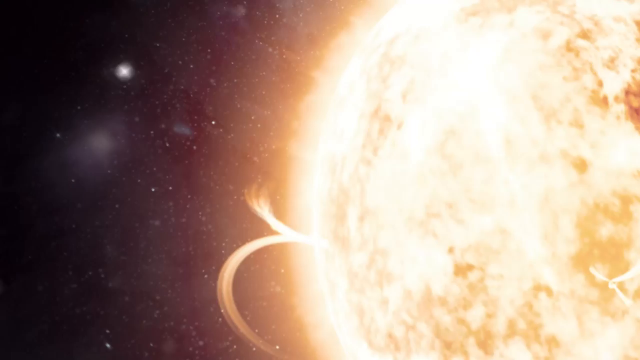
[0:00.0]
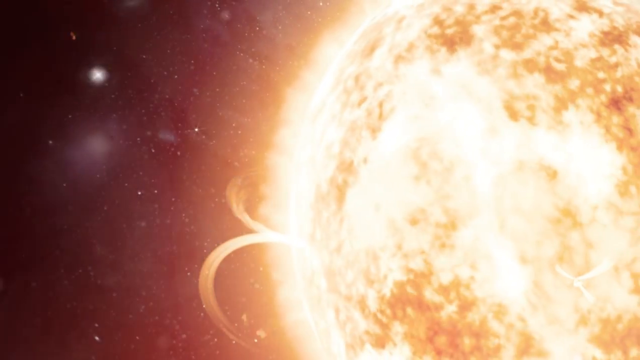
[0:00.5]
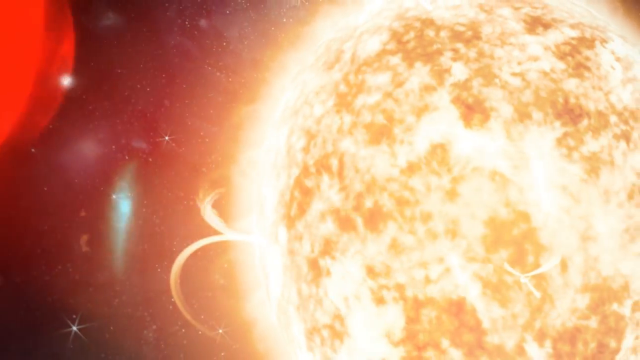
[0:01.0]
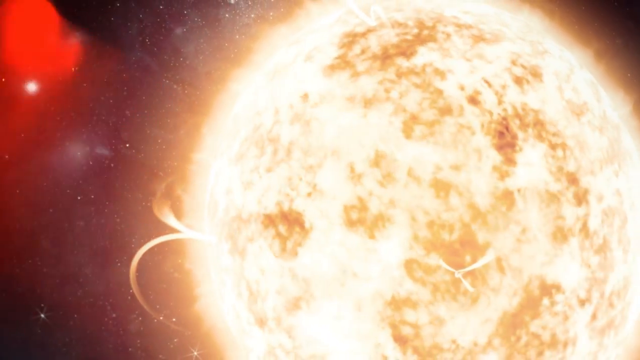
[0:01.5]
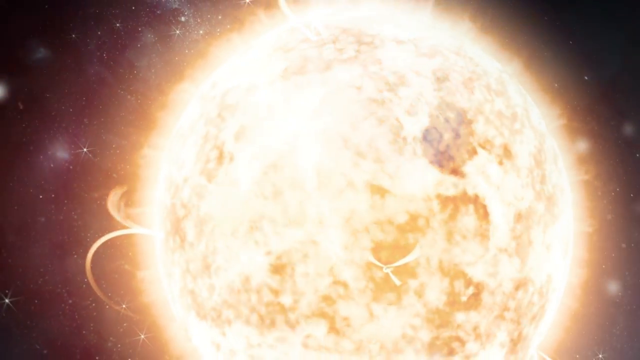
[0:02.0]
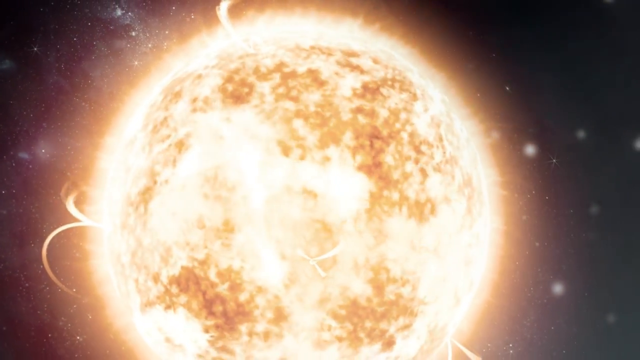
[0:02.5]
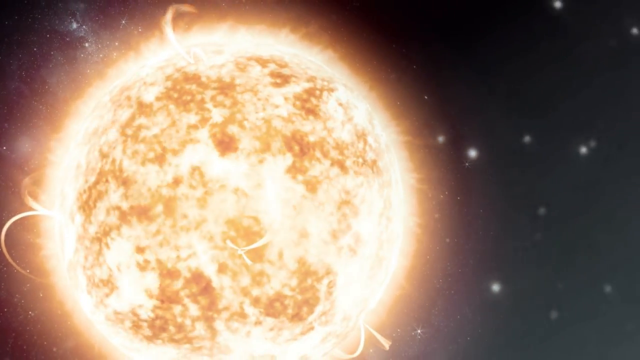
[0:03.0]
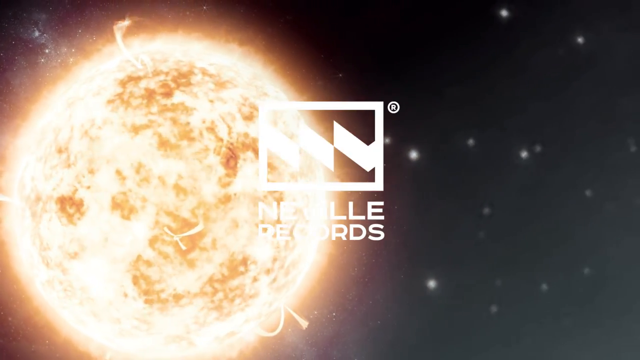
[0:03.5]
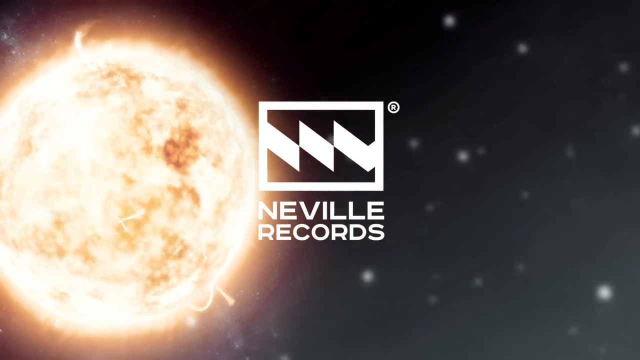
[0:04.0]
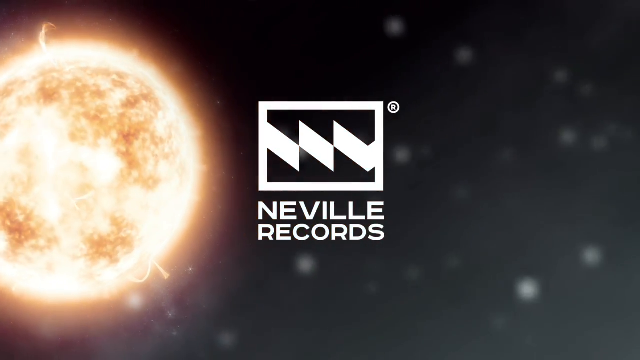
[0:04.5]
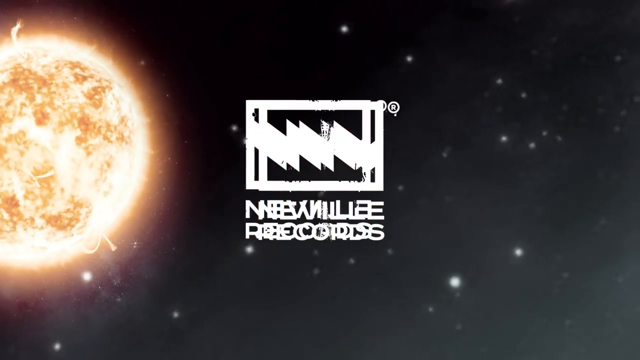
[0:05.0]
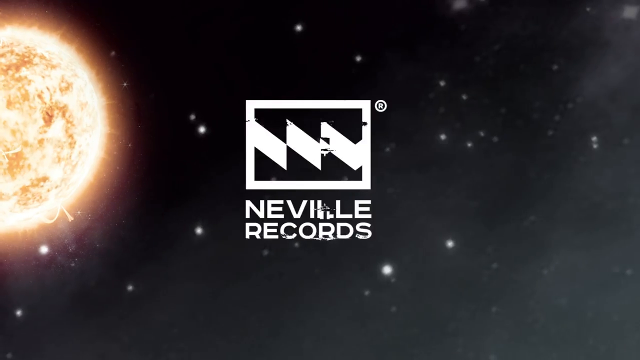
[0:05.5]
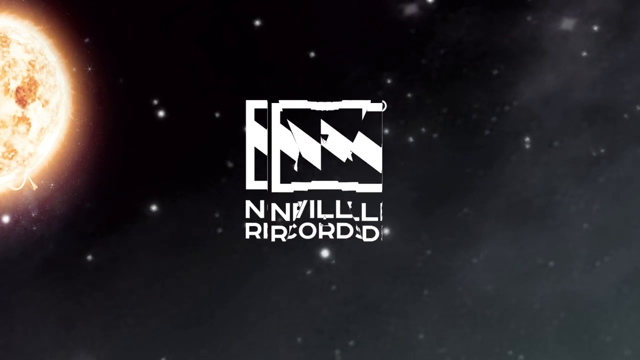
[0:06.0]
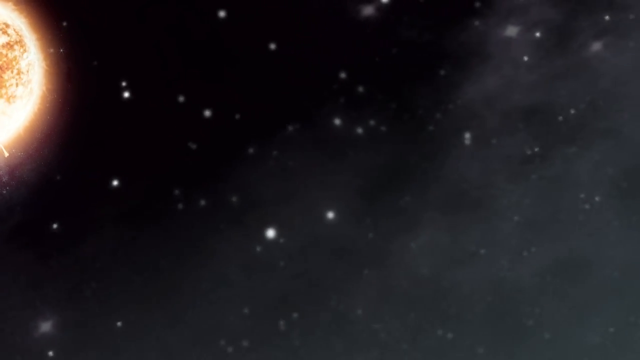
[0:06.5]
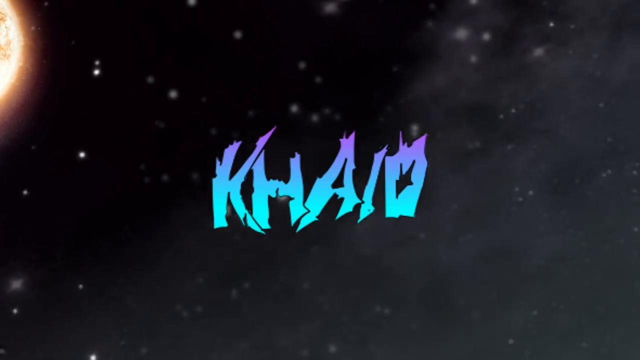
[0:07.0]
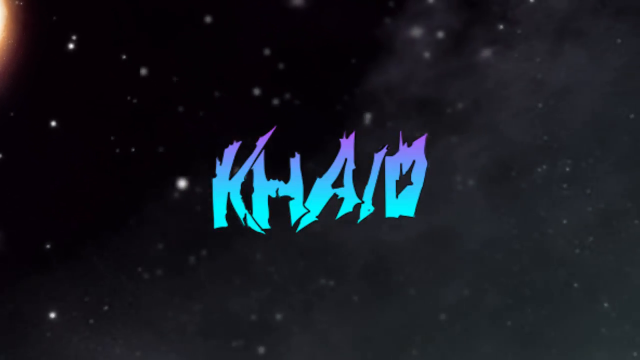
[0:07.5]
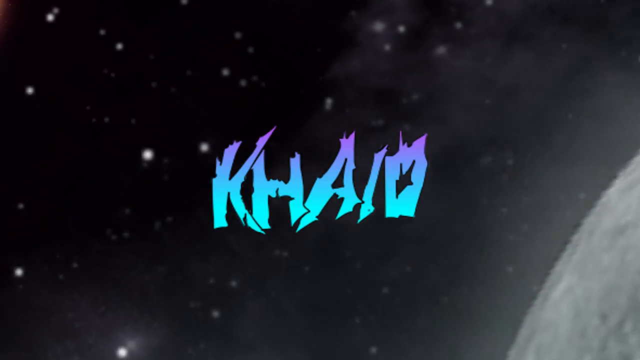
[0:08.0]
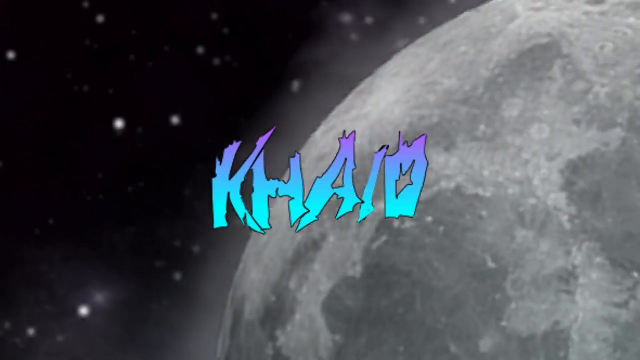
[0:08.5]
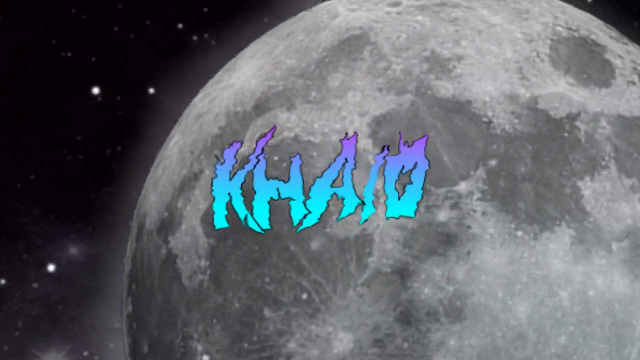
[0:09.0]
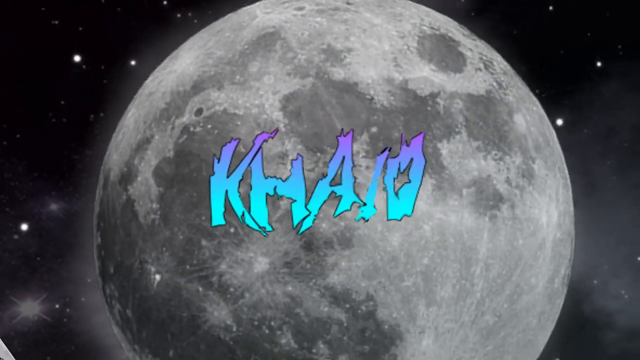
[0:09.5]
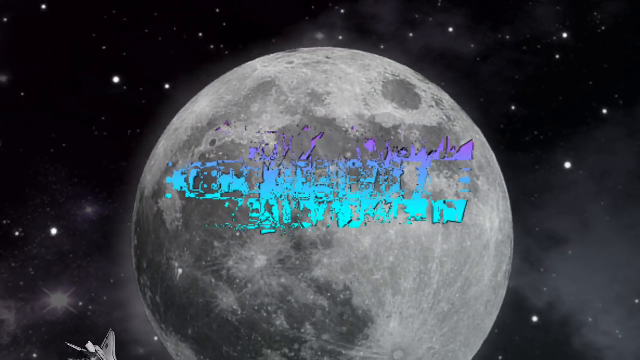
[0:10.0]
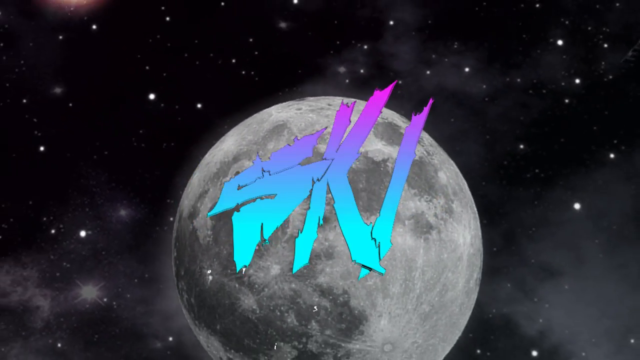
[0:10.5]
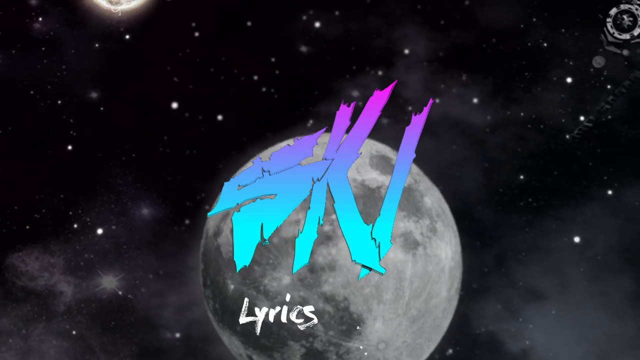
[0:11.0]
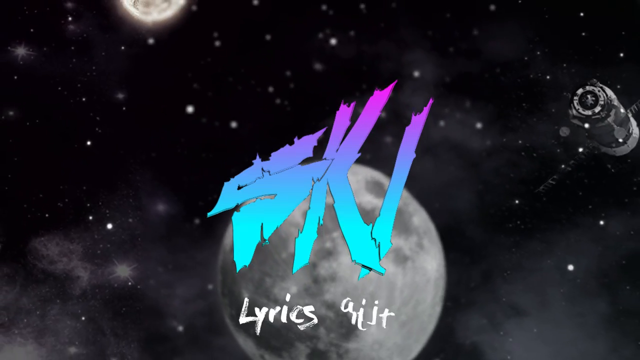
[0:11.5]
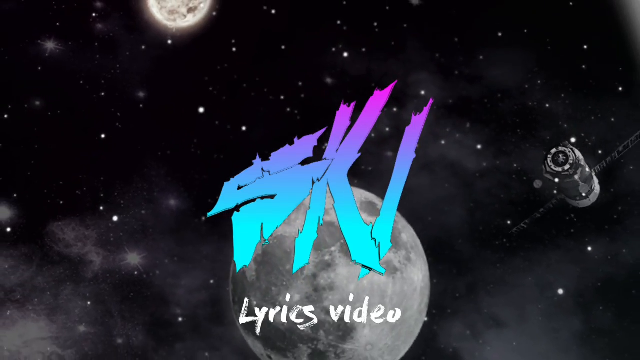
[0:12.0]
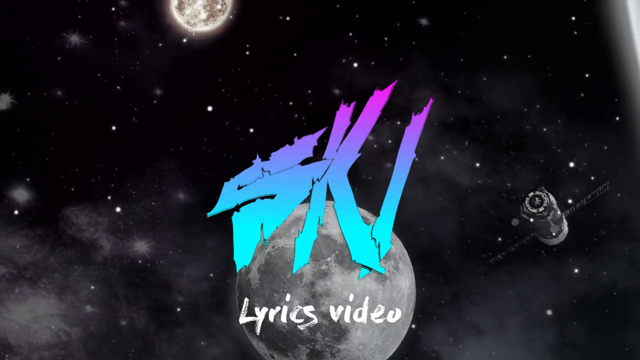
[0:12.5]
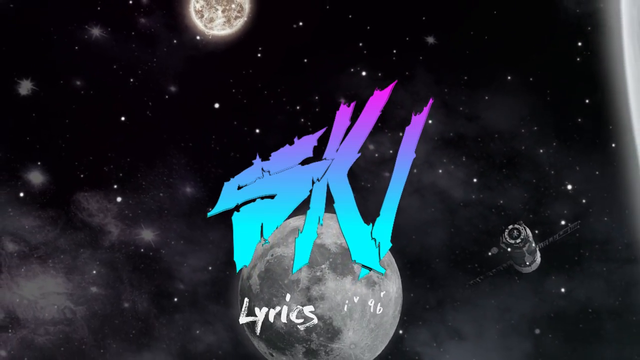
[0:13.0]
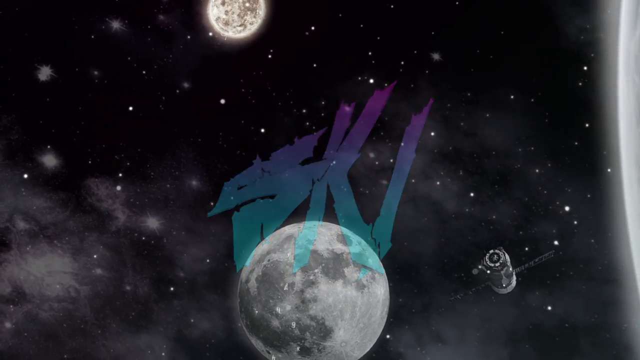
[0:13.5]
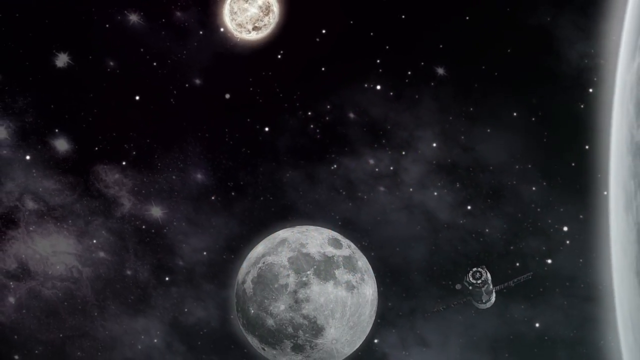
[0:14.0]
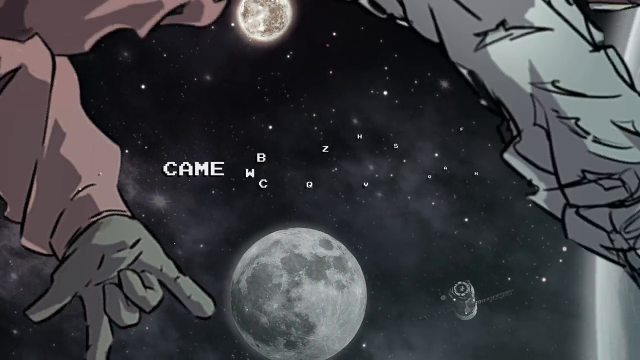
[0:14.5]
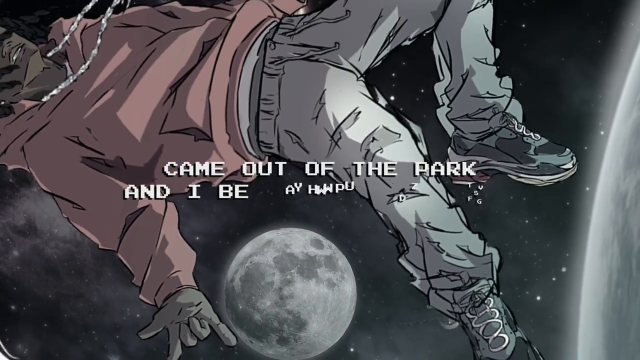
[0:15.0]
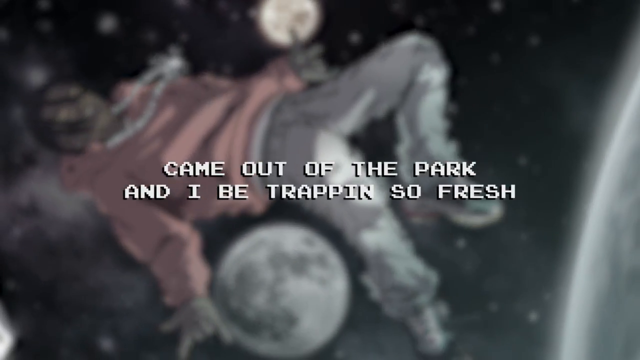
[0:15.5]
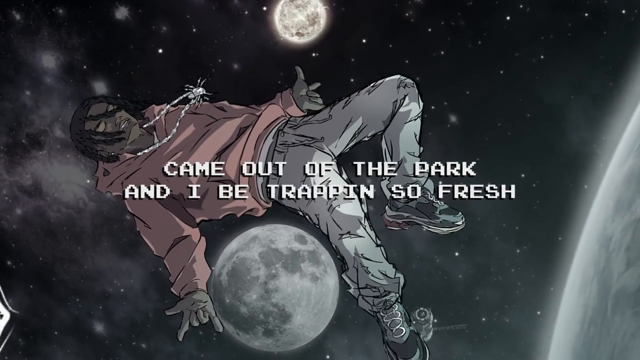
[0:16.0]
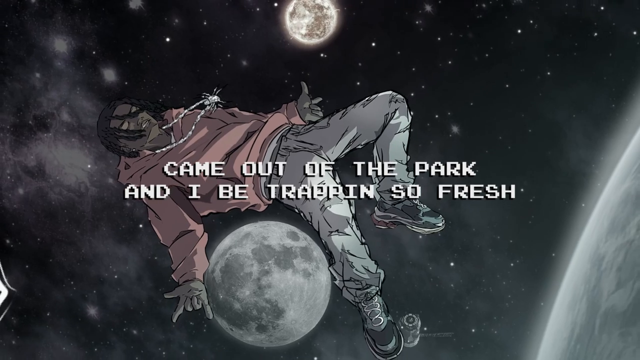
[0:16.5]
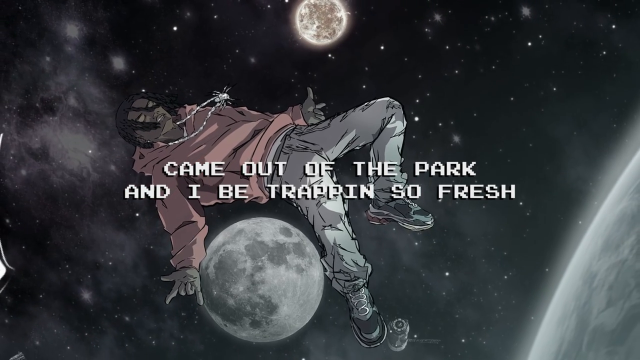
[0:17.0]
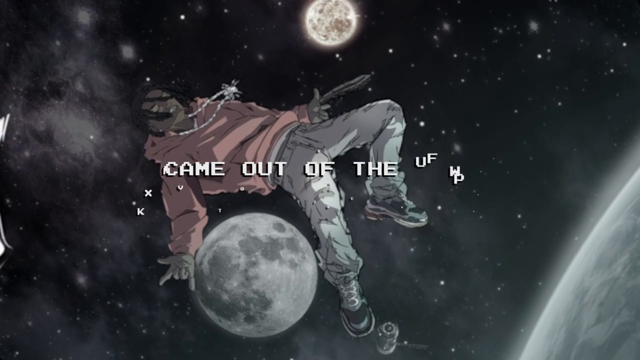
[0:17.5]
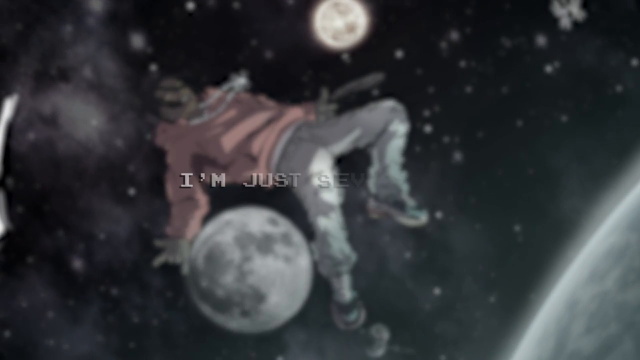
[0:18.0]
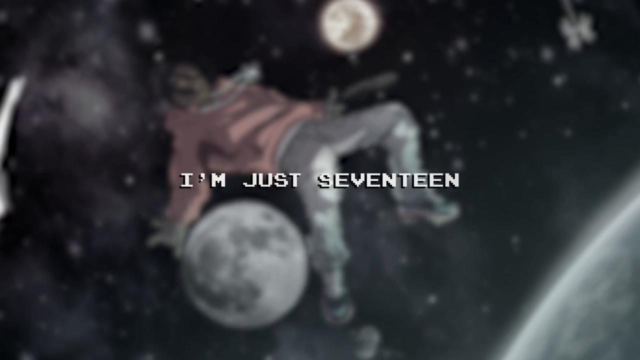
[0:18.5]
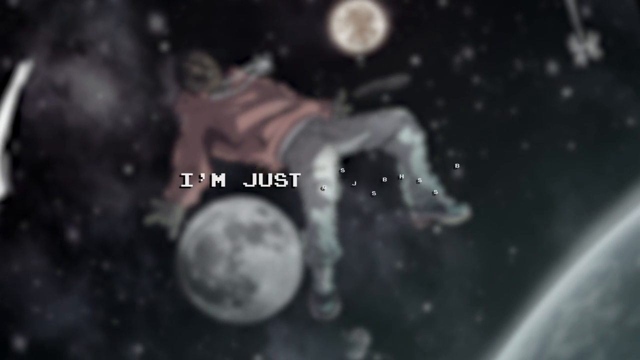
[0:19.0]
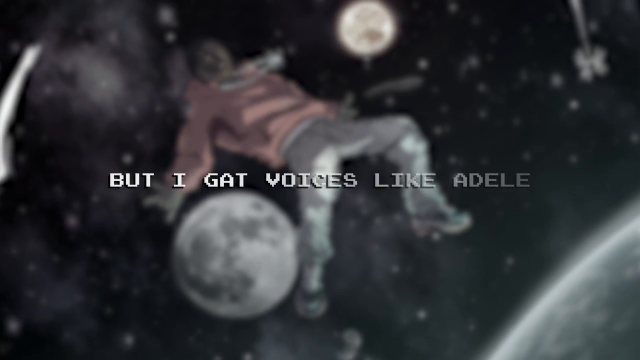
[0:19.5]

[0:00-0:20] What appears to be an animated music video plays in a horizontal, landscape format. It opens on a glowing, fiery sun or planet with energy coming off it, followed by something more like a moon planet, giving it an outer space theme. Satellites appear, and a person floats through space as lyrics start coming across the screen. The opening focuses on the sun, which then moves out of frame, and the Neville Records logo appears. It has a kind of glitch, and then text reads "Khaio" and then "Ski Lyrics Video." Text then reads "Came out of the park and I be trappin' so fresh," followed by "I'm just 17 but I gat..." before it cuts off. The lyrics float through space, all animated with a somewhat glitchy aesthetic. The type is a pixel-based bitmap-style font that looks a bit like a retro video game.